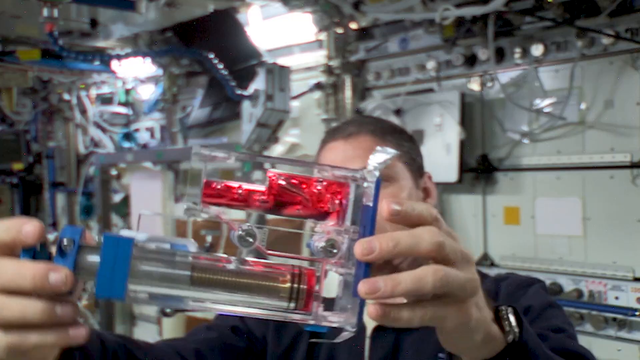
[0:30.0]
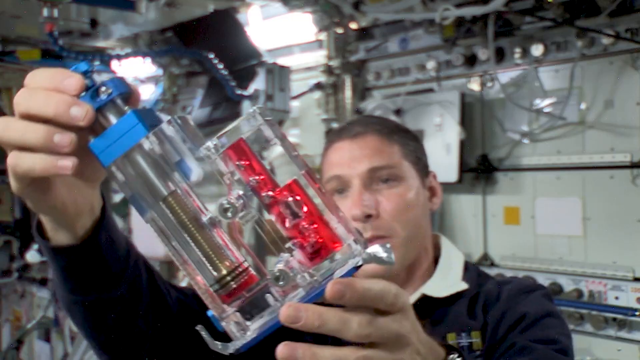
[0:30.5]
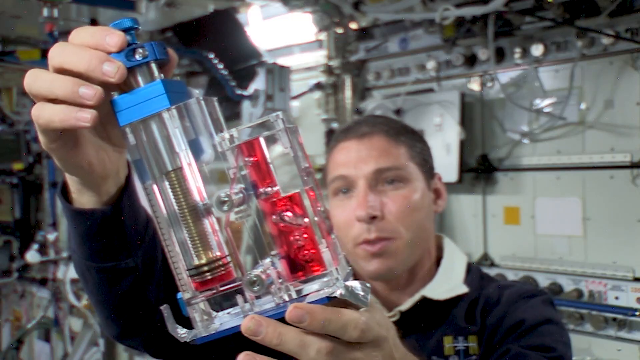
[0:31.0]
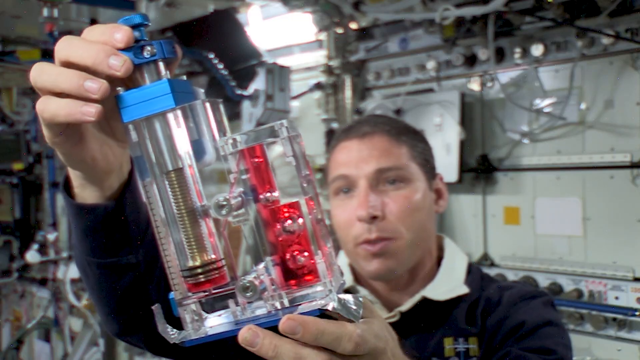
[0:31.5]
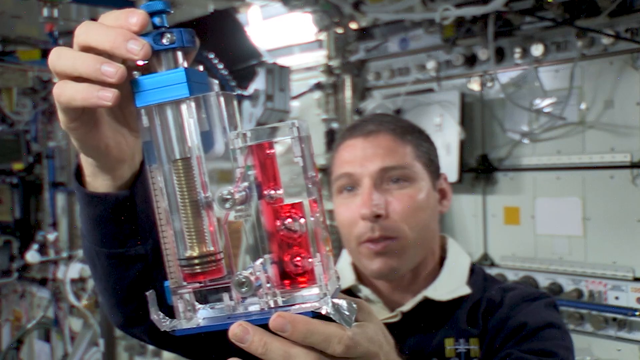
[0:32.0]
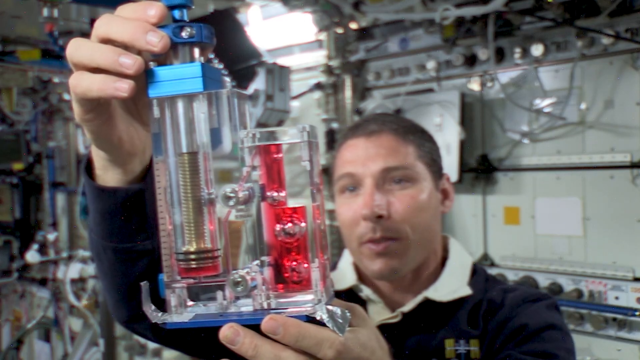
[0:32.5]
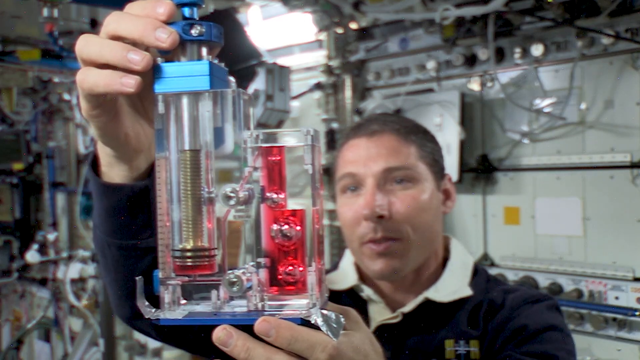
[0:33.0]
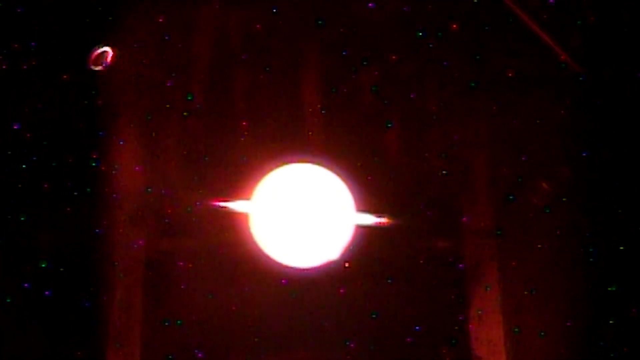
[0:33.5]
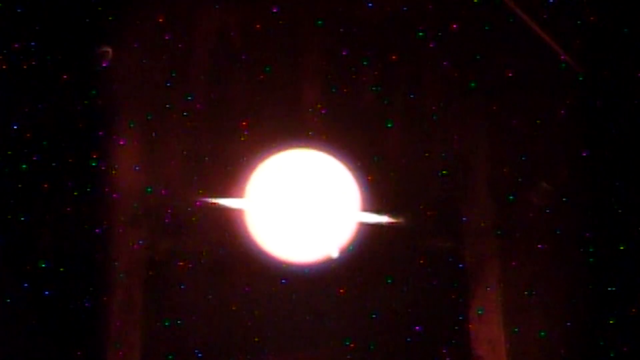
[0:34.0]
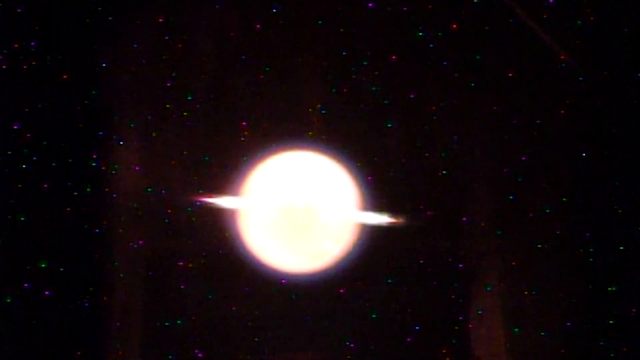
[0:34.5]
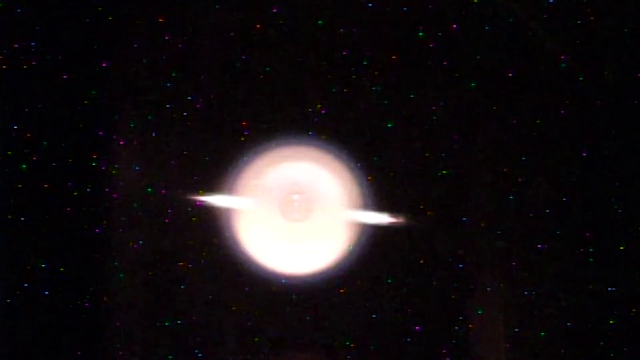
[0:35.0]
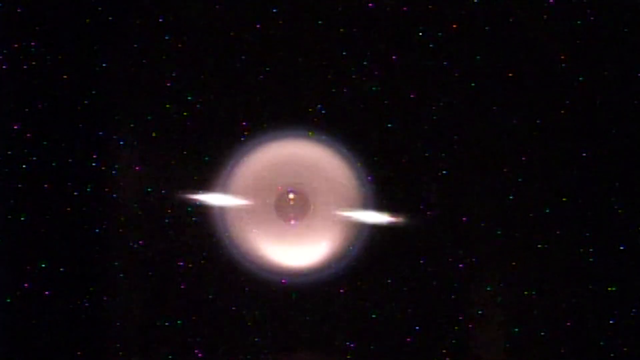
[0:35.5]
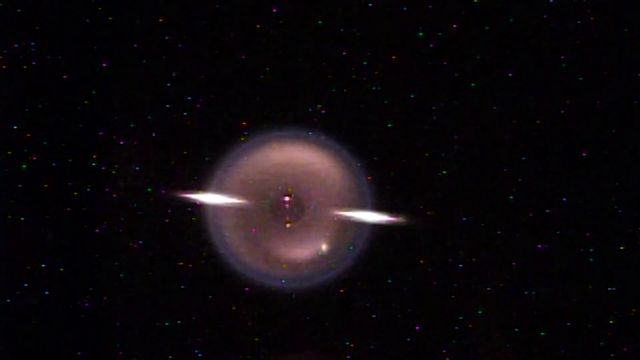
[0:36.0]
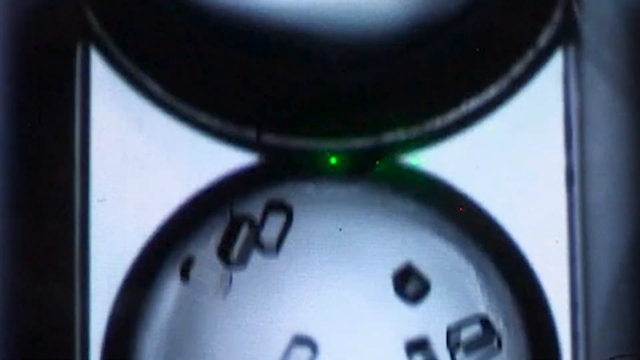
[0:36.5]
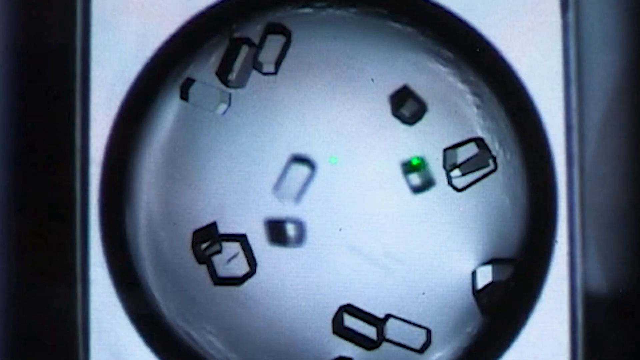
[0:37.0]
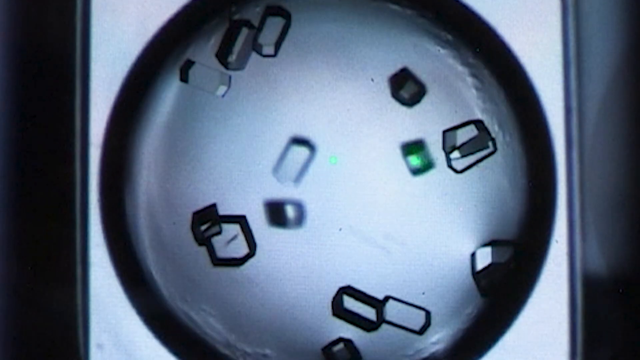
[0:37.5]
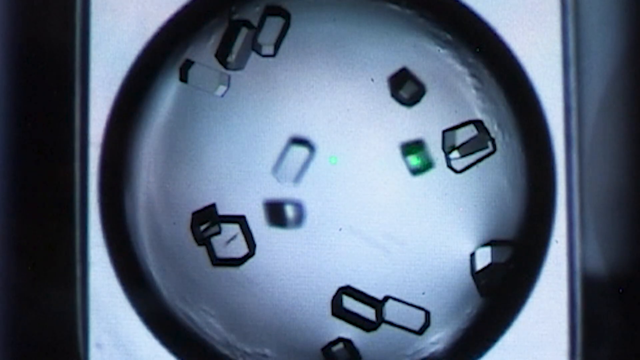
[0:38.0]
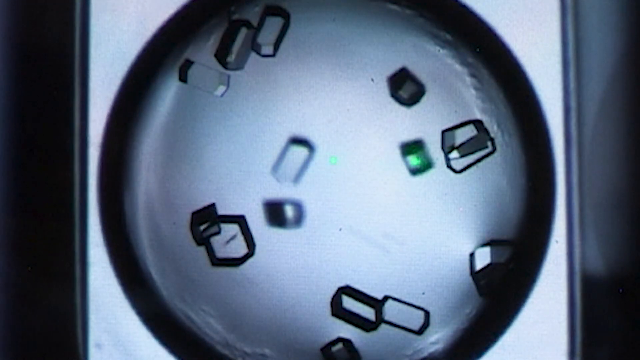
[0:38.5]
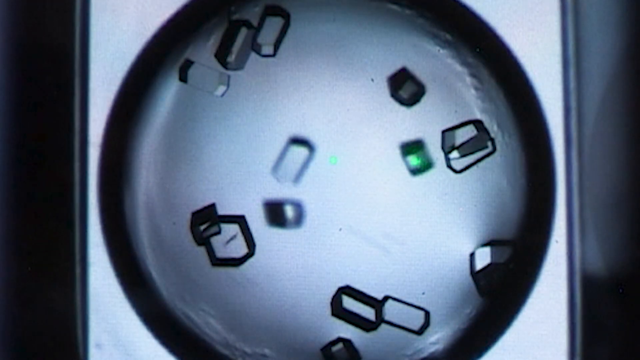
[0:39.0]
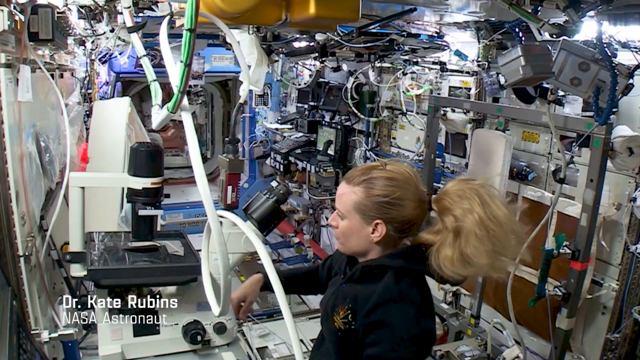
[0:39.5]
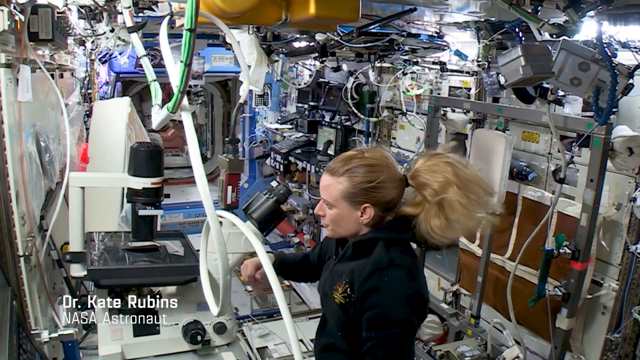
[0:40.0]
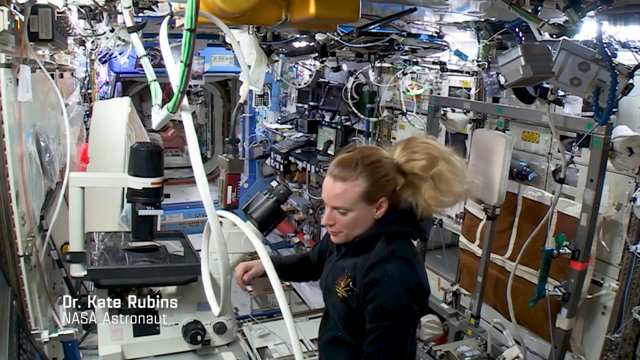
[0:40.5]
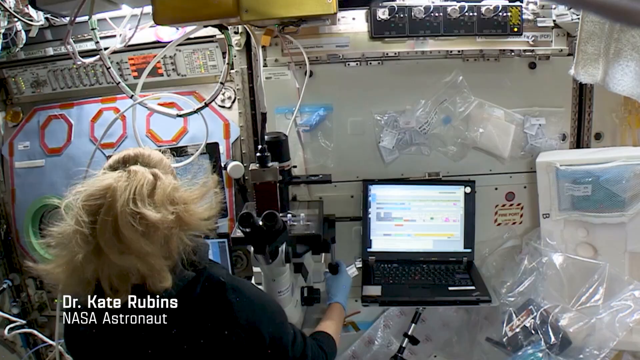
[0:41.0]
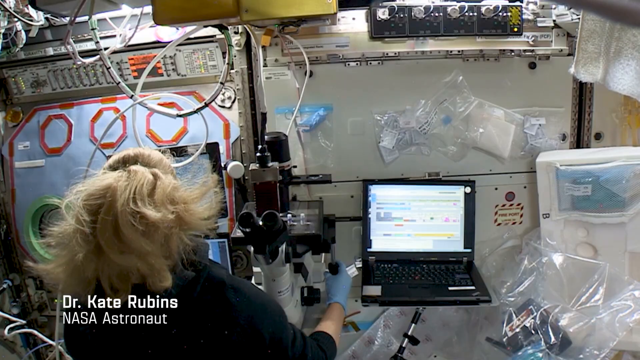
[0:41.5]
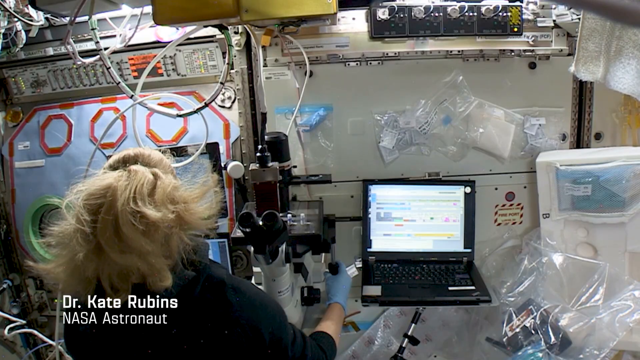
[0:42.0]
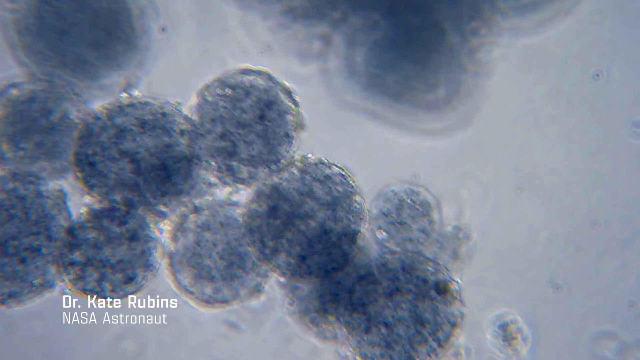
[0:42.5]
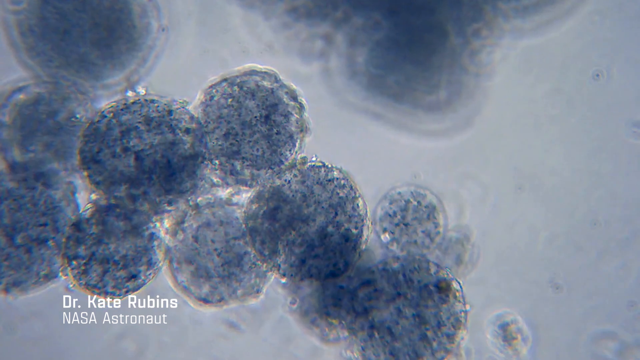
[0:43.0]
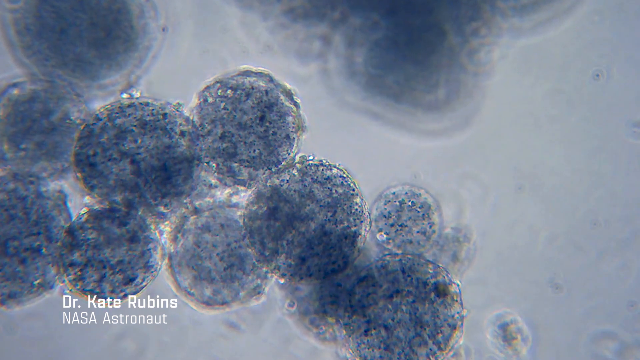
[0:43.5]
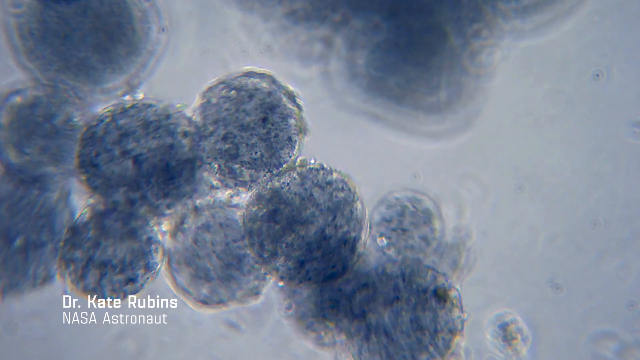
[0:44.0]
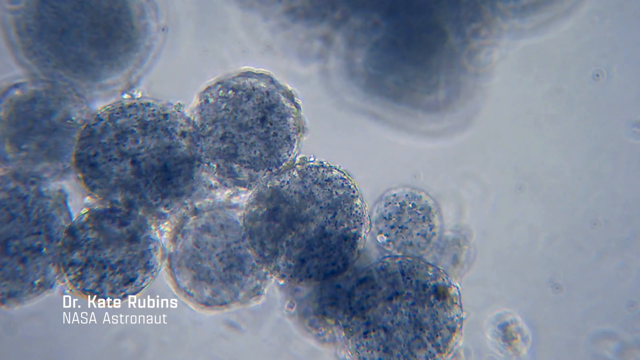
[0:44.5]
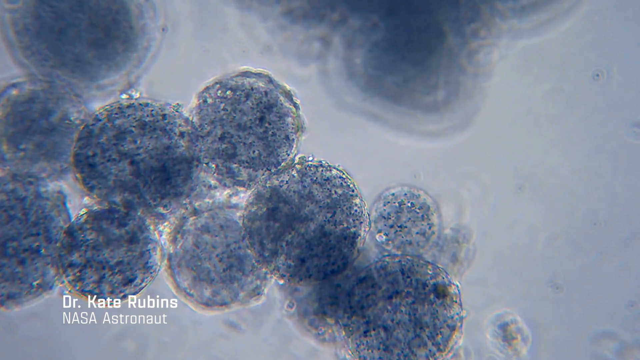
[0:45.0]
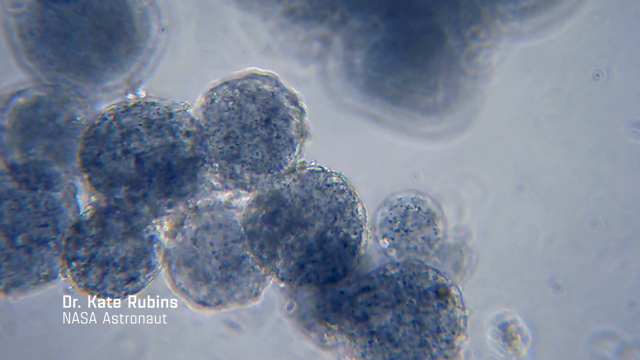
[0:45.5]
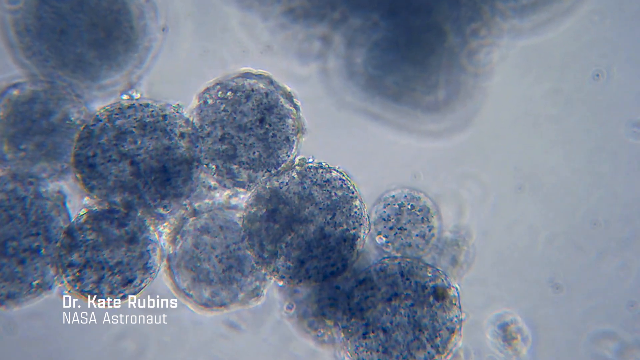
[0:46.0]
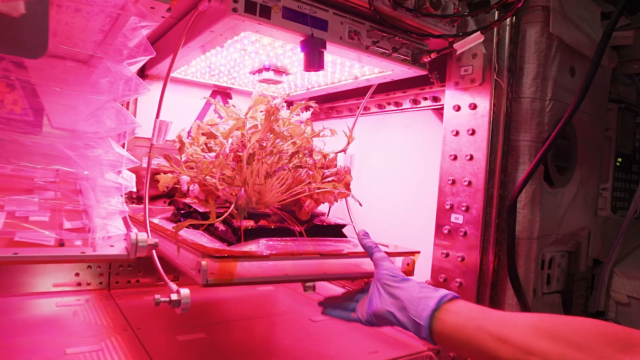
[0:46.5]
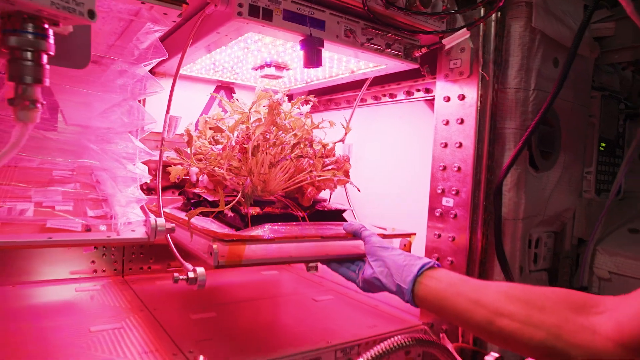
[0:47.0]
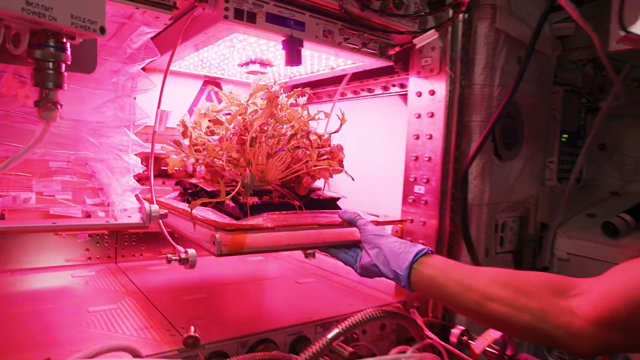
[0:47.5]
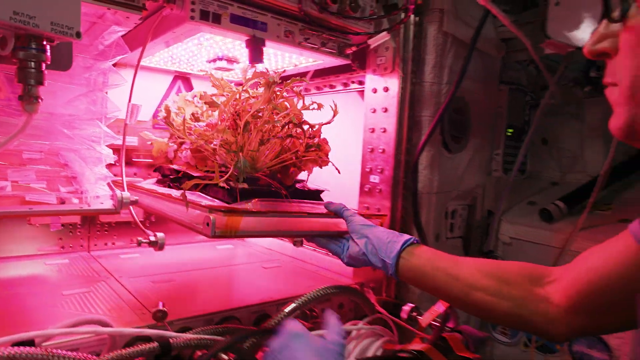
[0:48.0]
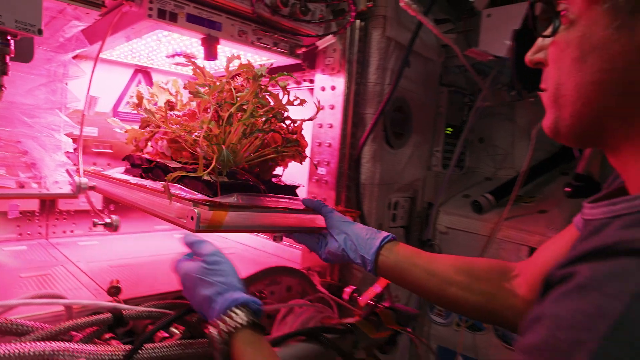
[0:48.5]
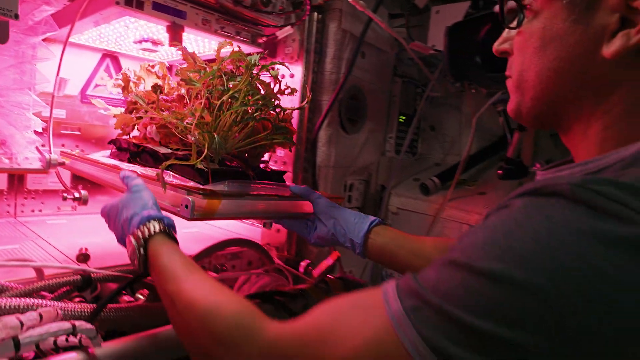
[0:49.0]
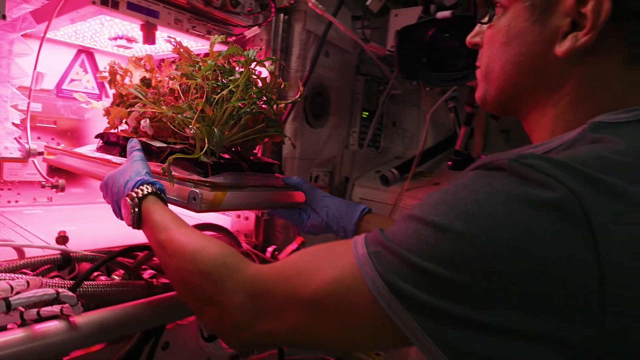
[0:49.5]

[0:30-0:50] Space imagery and experiments being done in the International Space Station are shown in cut-in-and-out fashion, with one person working on one experiment and then a cut to another experiment. First, a man with short hair looks at a sealed clear container holding a red liquid with bubbles floating in it. The video shifts to a bright light-out-in-space image and things being viewed under a microscope, then to a young woman floating in zero-g with the name "Dr. Kate Rubins" and "NASA astronaut" on the screen underneath her. It shifts to more things viewed under a microscope, and then plants being pulled out of a storage-style container with a bright light on them.